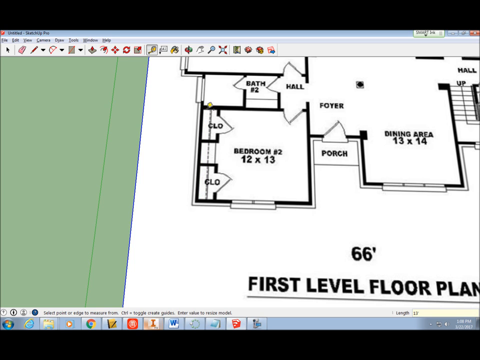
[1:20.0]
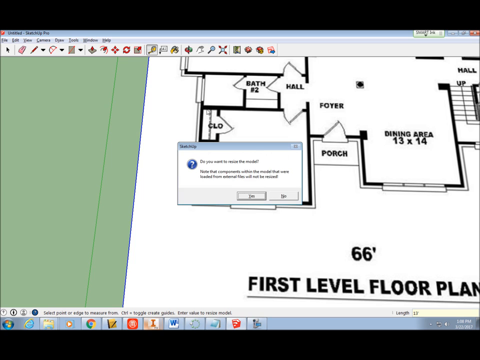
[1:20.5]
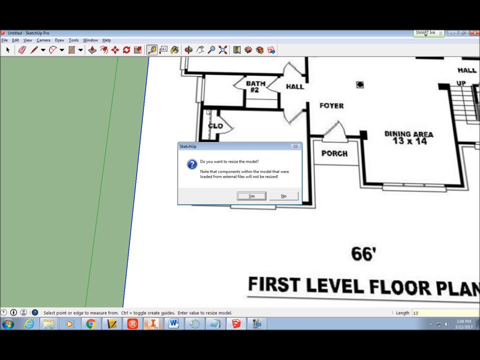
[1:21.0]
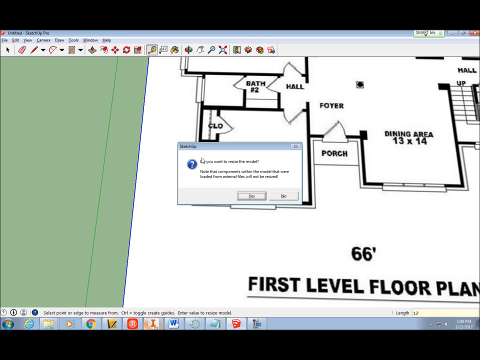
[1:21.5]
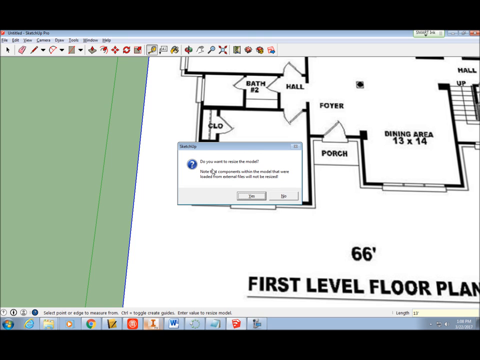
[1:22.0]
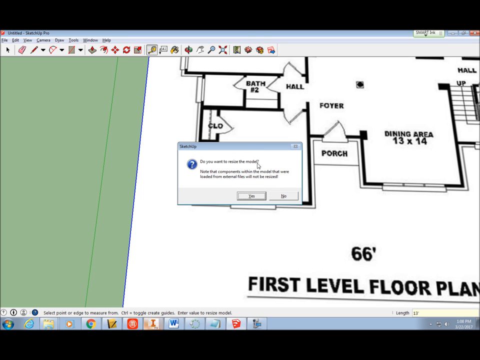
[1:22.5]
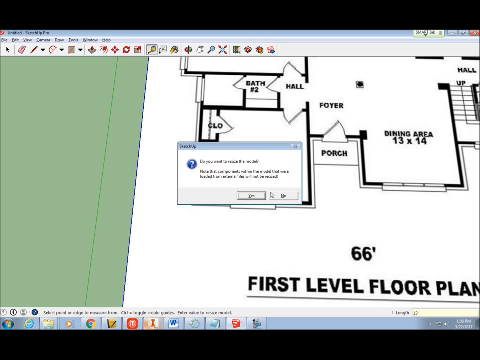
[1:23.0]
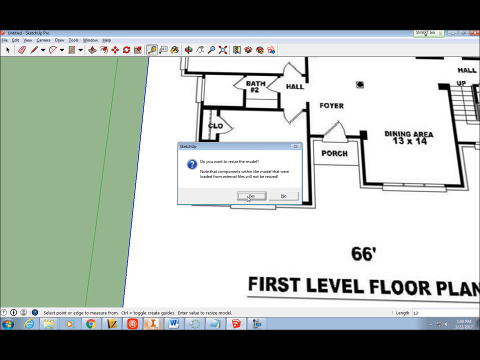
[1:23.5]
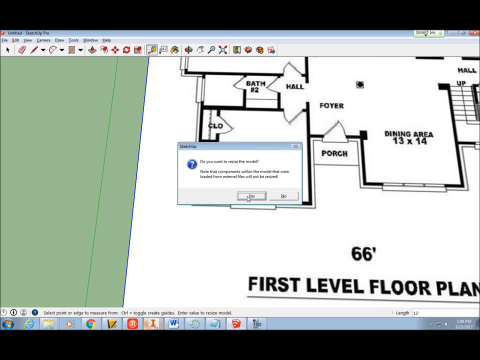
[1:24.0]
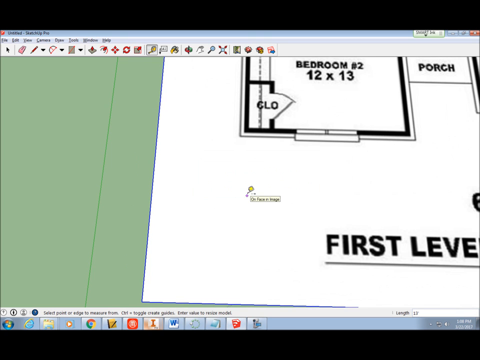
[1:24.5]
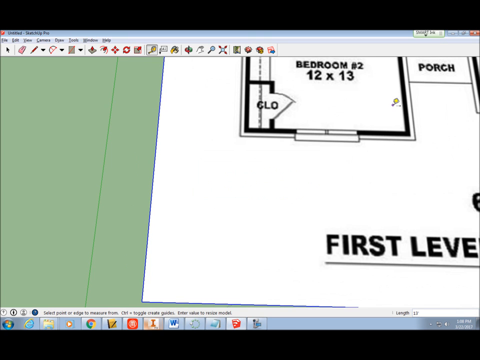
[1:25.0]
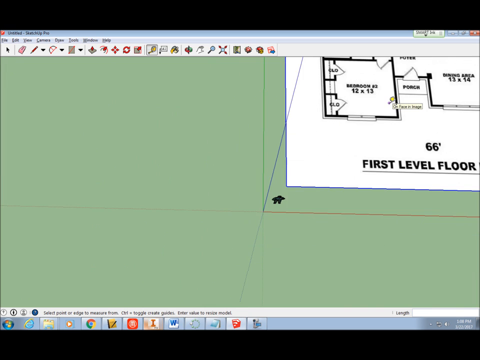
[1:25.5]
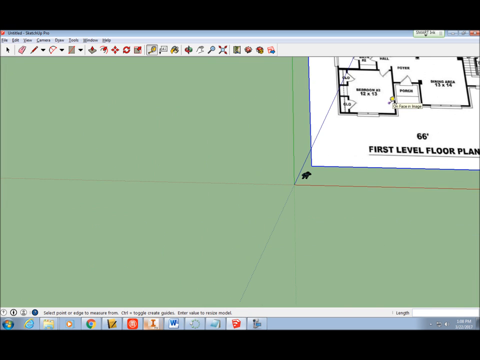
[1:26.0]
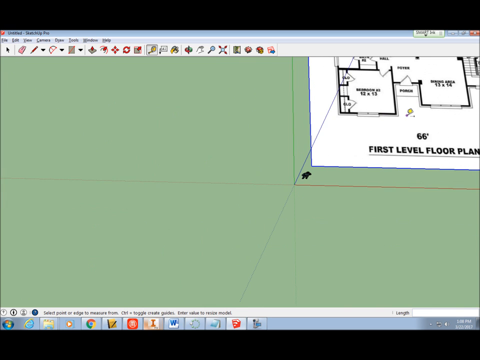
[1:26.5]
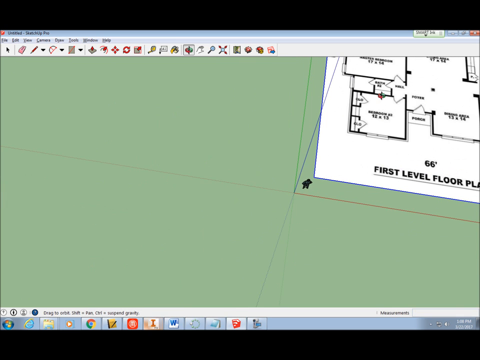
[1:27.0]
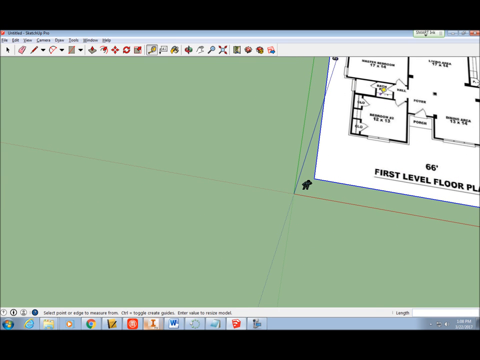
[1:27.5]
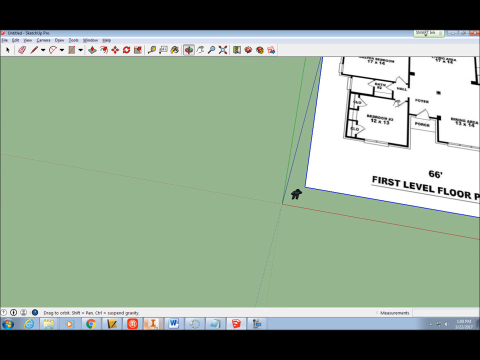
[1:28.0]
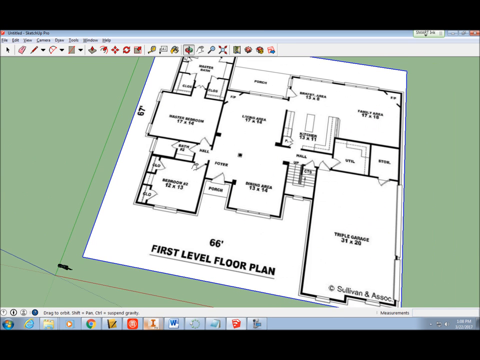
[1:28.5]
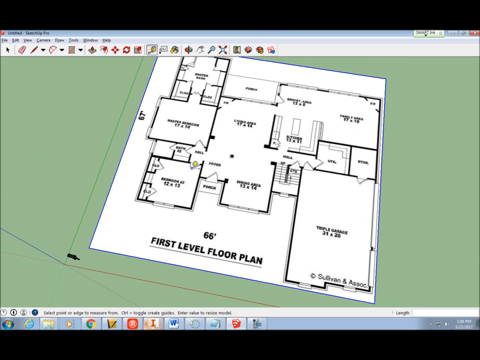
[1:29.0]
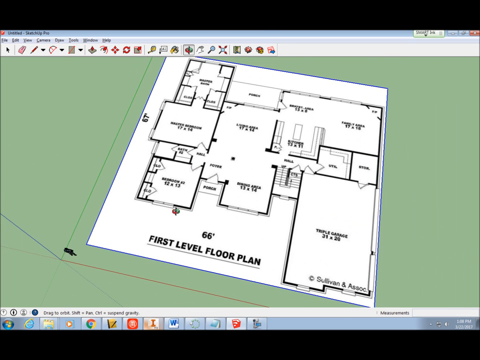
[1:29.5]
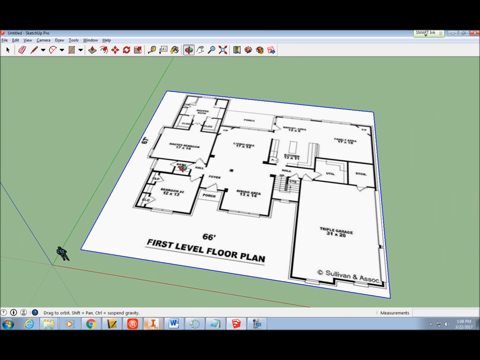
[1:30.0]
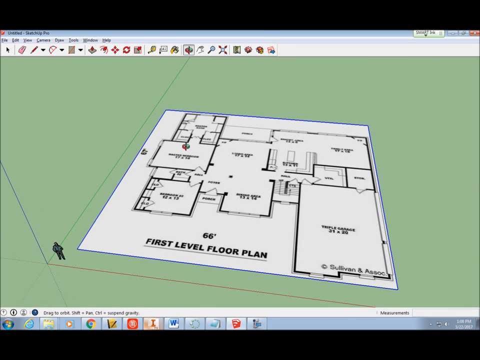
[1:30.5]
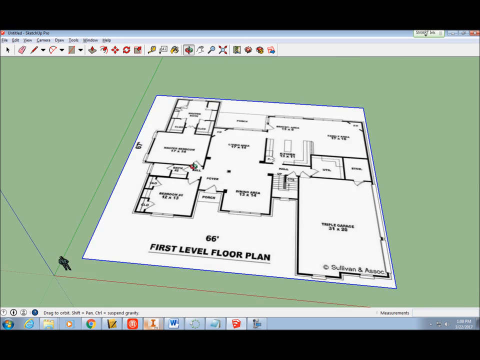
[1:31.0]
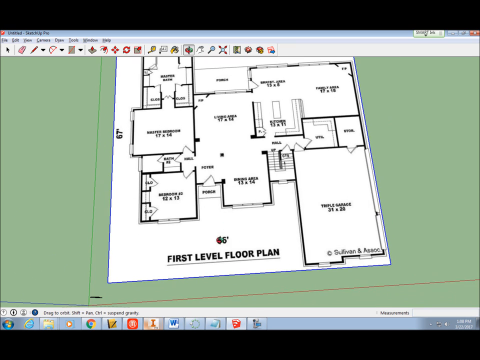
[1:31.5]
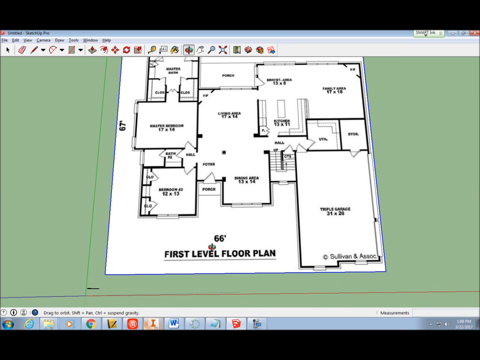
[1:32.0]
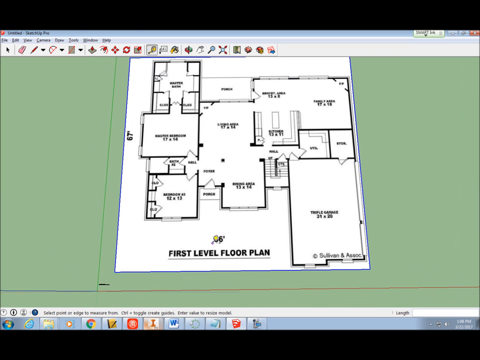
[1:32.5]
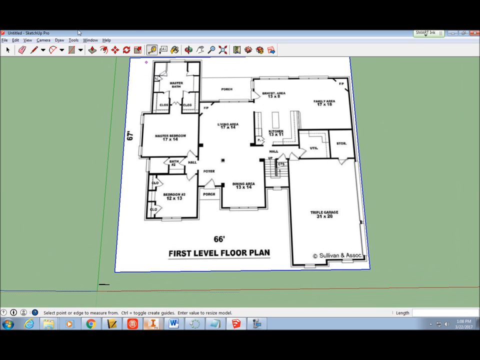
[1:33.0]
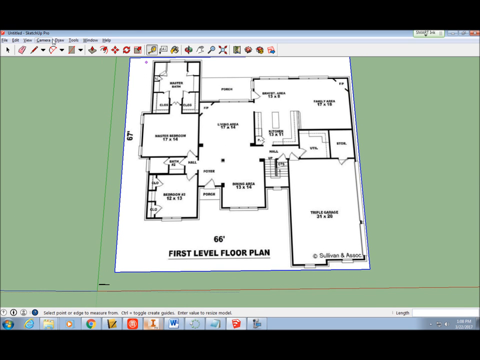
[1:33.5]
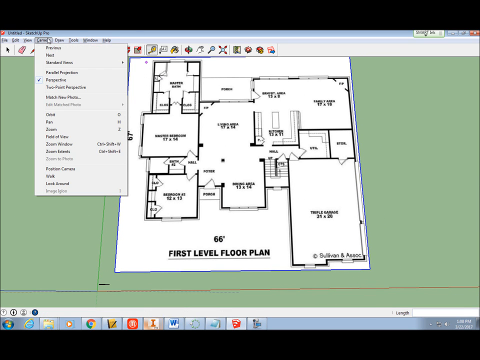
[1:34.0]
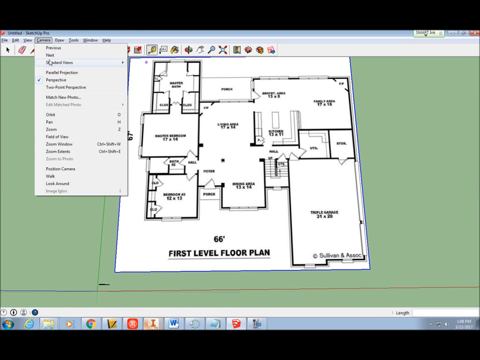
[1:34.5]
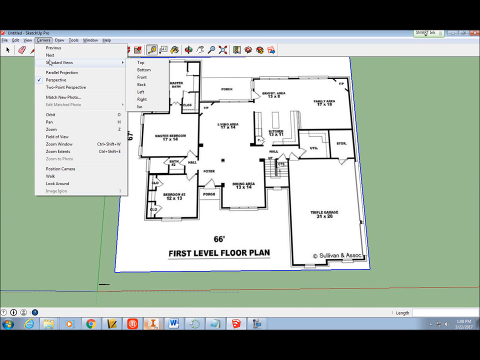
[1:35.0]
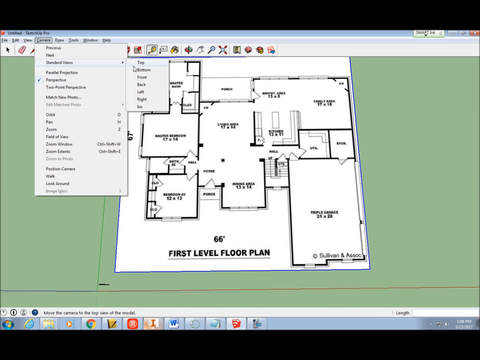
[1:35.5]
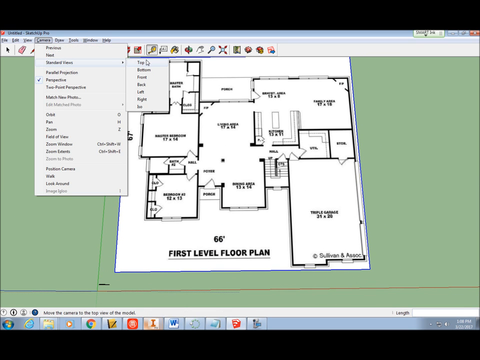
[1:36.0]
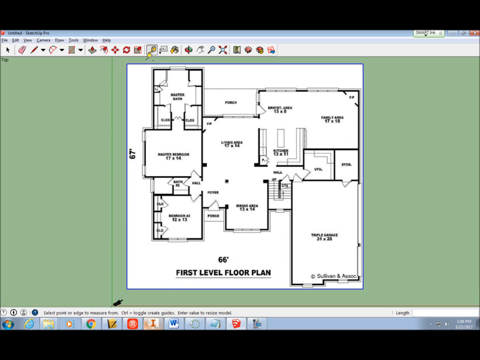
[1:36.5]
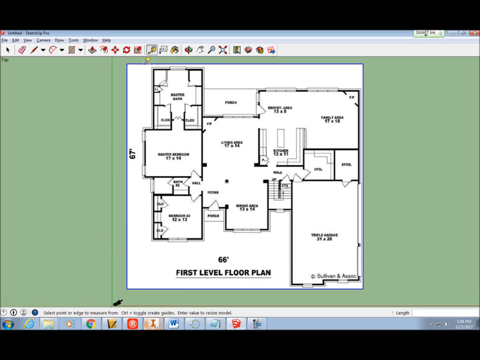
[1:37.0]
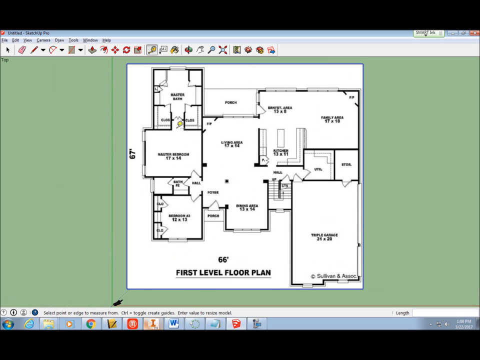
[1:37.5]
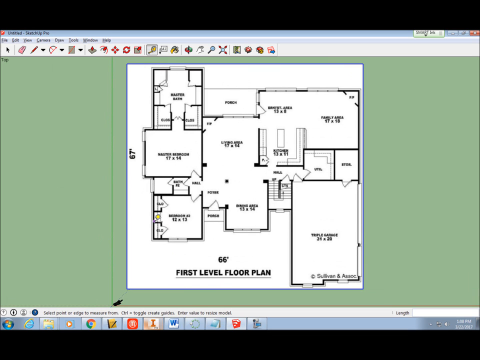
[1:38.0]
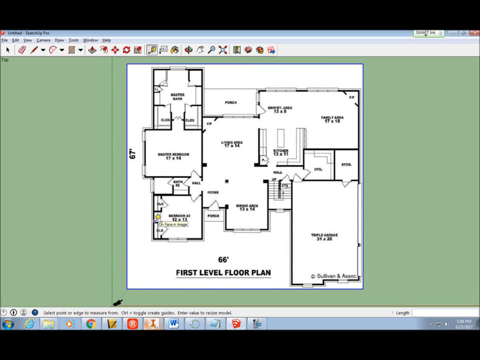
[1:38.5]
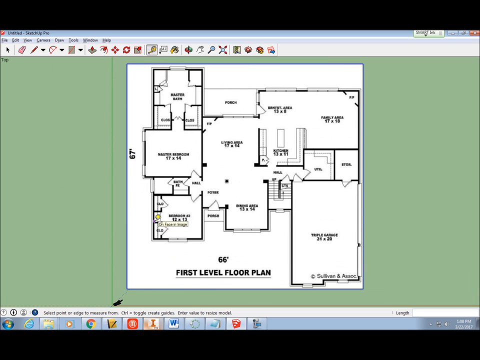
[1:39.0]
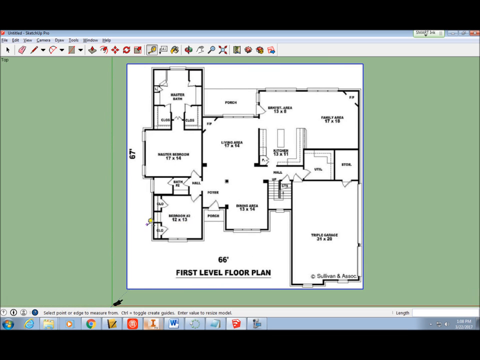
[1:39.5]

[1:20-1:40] The whole plan is shown. The user works on the plan, first using the tape measure to take measurements. A prompt appears asking "do you want to" do something, and the user is seemingly about to click yes. The user takes measurements again with the tape measure. The building plan has a number of rooms, though how many is not clear. It is named the first level floor plan.